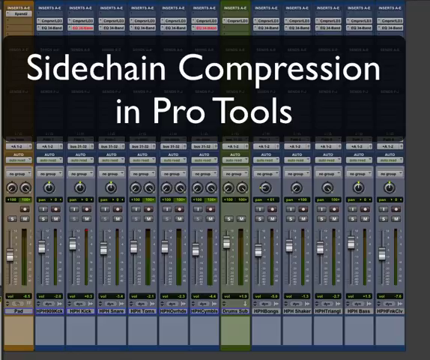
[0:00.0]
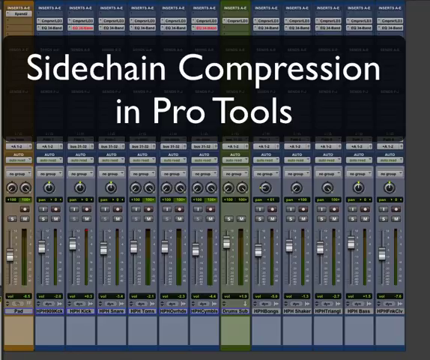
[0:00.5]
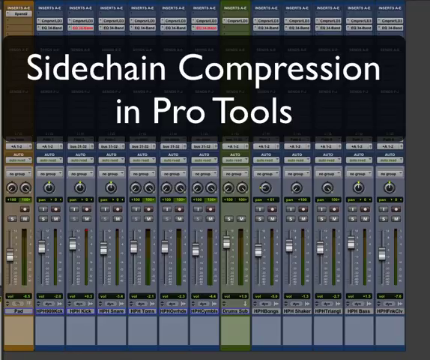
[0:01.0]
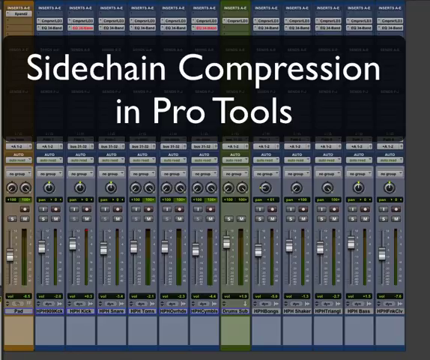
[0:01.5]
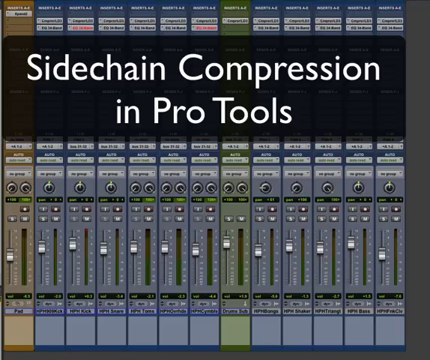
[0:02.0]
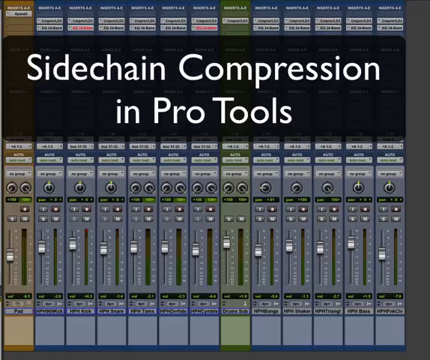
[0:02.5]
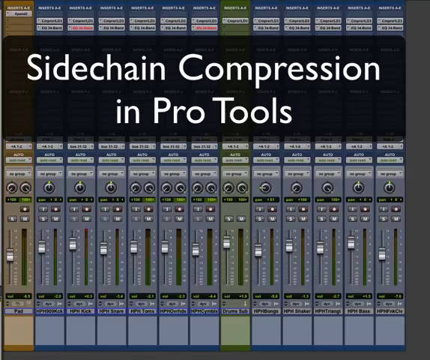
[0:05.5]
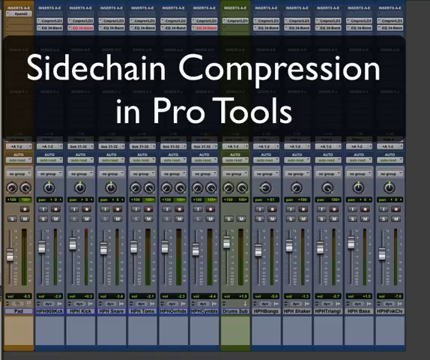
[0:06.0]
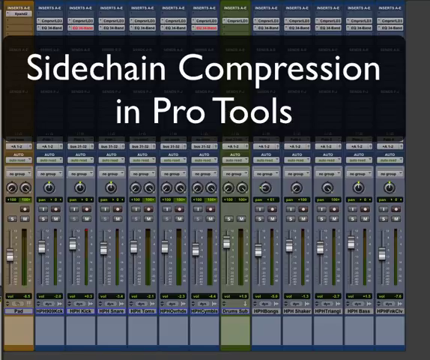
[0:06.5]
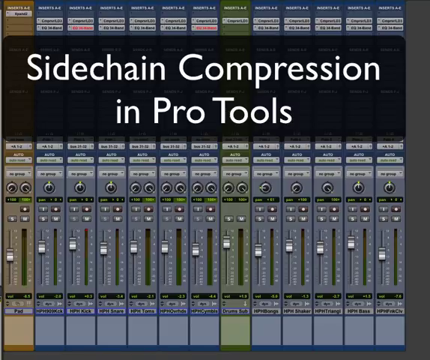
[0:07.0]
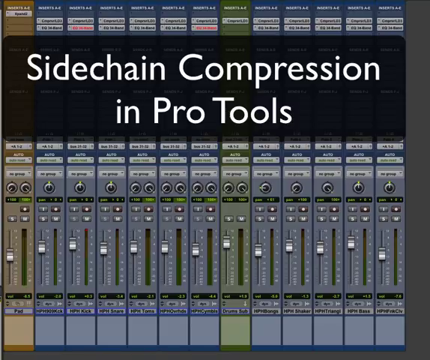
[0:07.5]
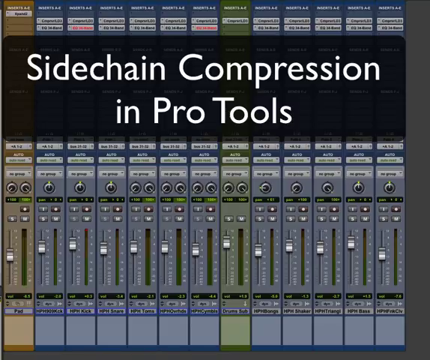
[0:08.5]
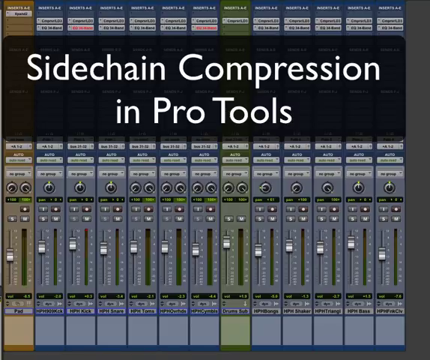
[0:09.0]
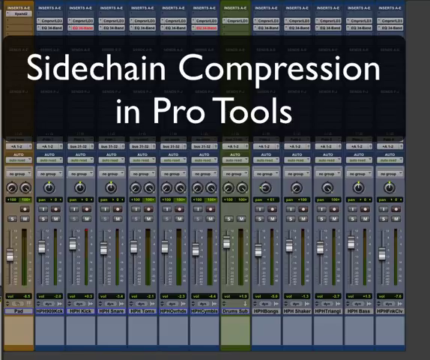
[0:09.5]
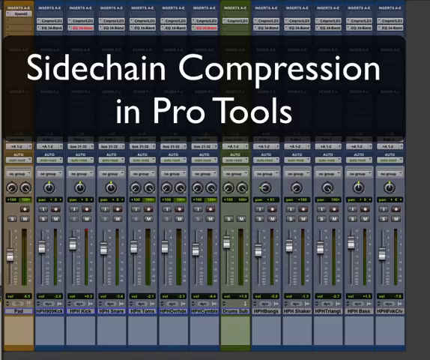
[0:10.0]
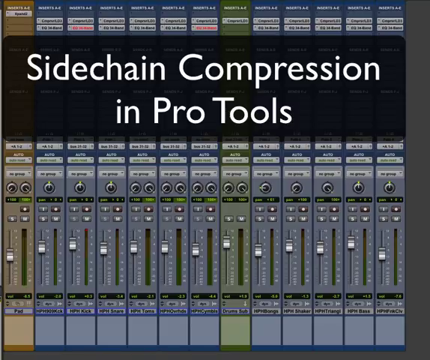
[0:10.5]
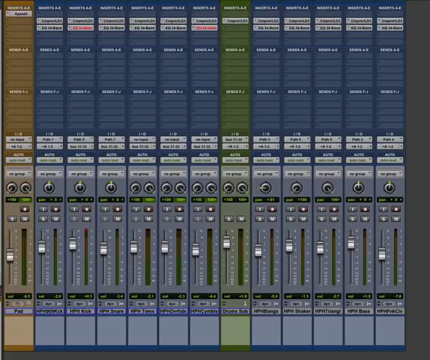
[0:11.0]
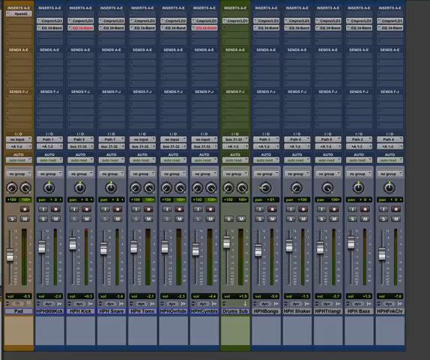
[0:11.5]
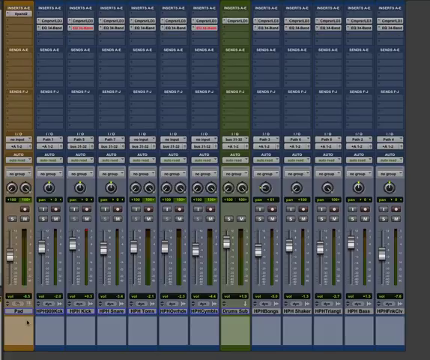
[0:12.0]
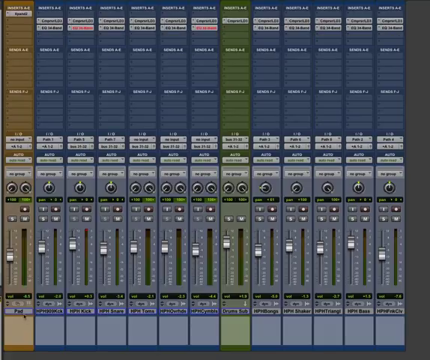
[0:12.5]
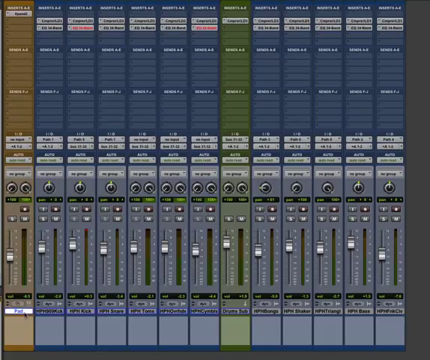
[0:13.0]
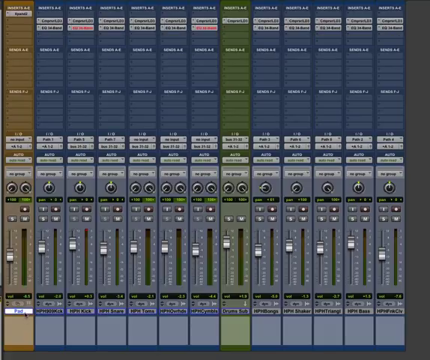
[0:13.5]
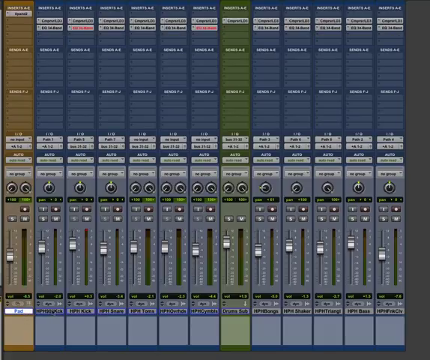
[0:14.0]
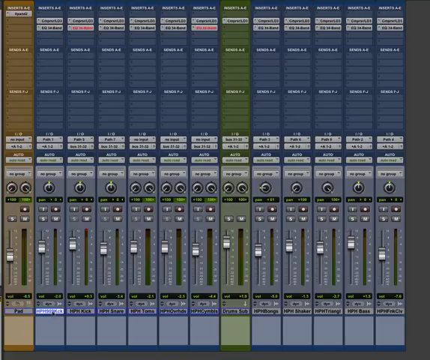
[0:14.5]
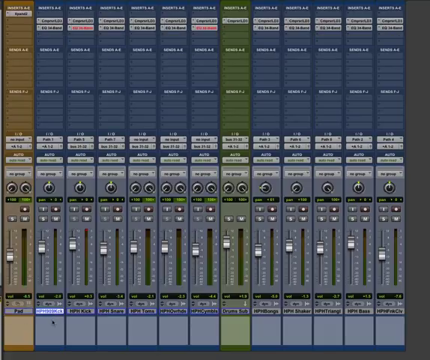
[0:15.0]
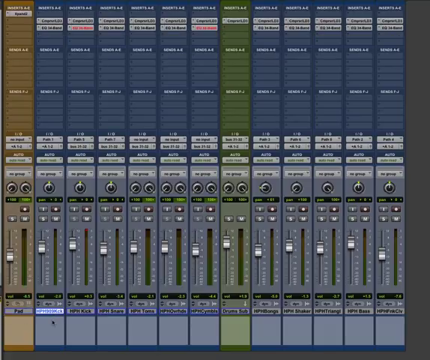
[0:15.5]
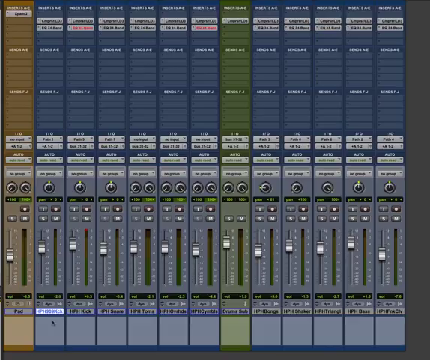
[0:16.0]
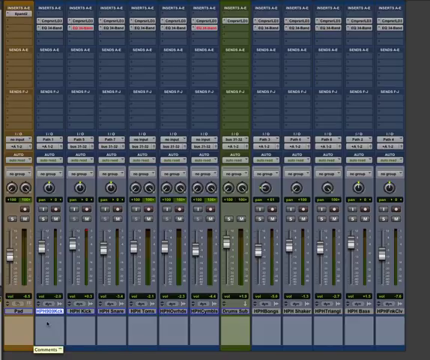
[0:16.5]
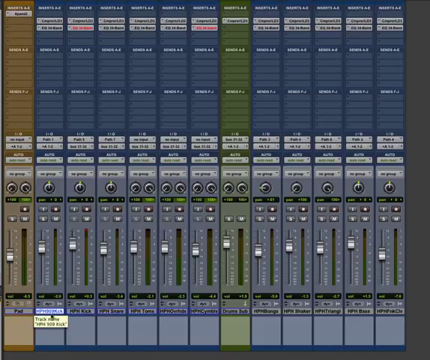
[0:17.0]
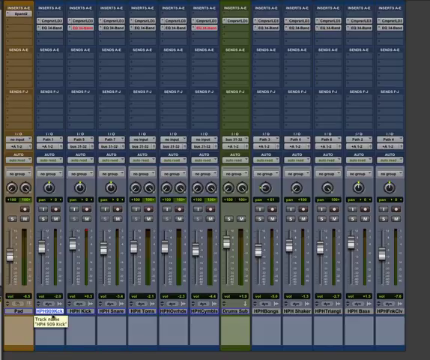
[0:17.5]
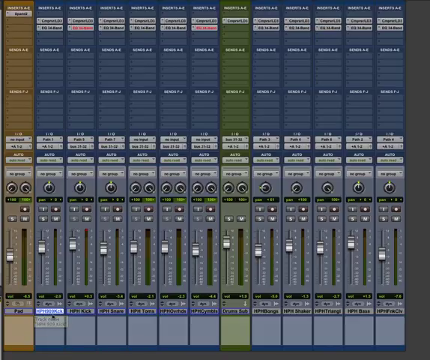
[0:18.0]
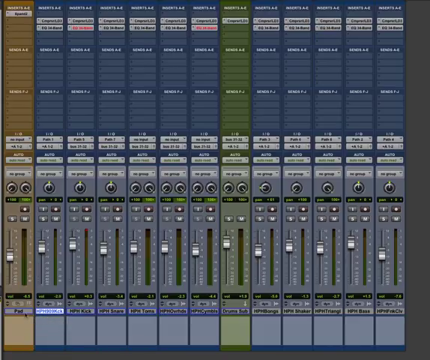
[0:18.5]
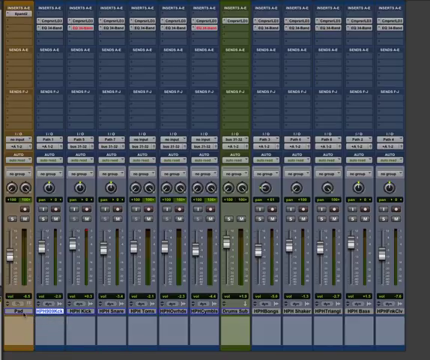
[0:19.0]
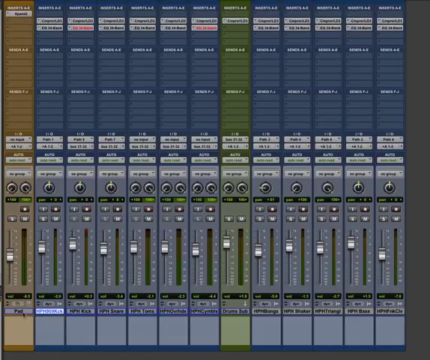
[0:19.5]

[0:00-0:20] White bubble letters with black outlining on a blue screen read "side chain compression in Pro Tools." Below there seem to be about 15 little slots, each with a button. The first column is light brown, the next six or seven columns are light blue, then comes a light green one followed by a light blue one. In the middle is a little button that slides up and down, with two slots to it. There are three little buttons in the middle, with two little green buttons on top, and two round circular buttons that turn, each with a little line going through it. There are about three buttons above those. As the video progresses, lines go upward, and the colors stay the same: brown, dark blue and three more dark blues, then green, and then the pattern repeats.